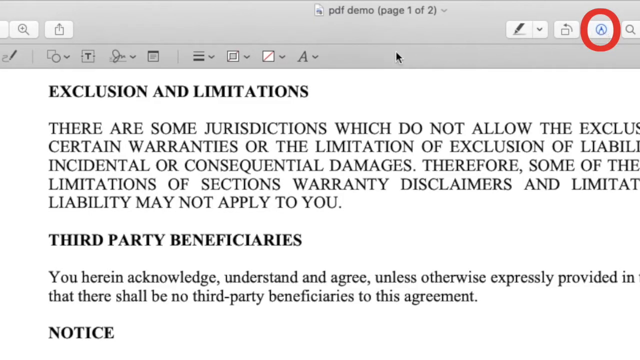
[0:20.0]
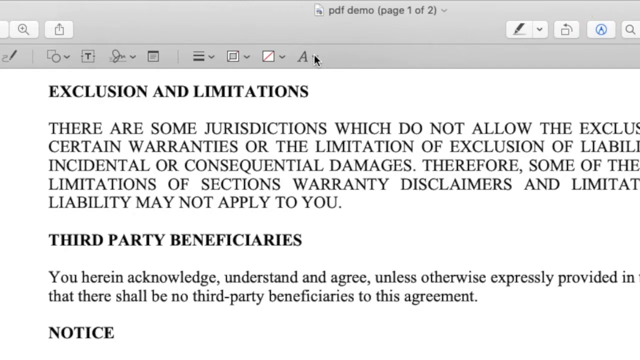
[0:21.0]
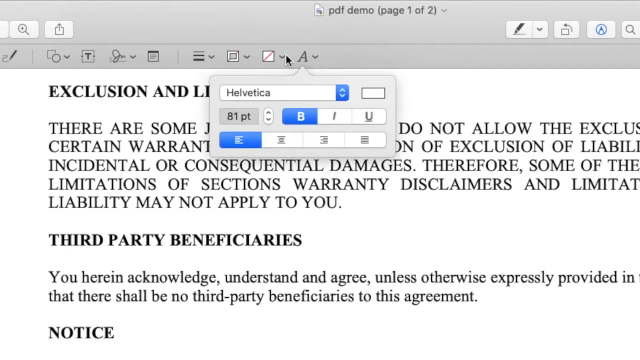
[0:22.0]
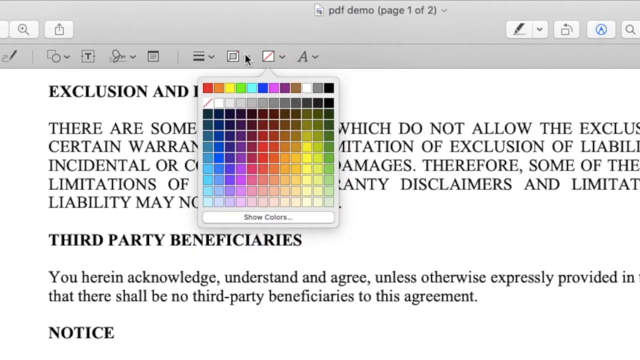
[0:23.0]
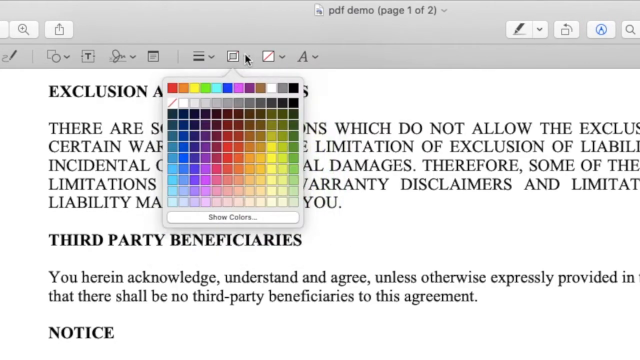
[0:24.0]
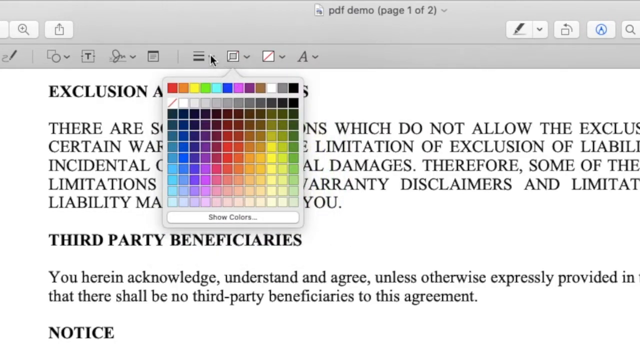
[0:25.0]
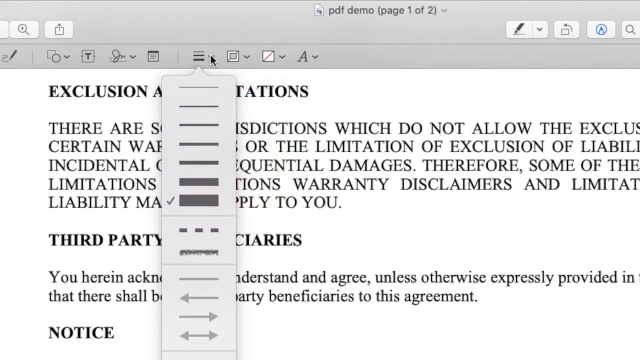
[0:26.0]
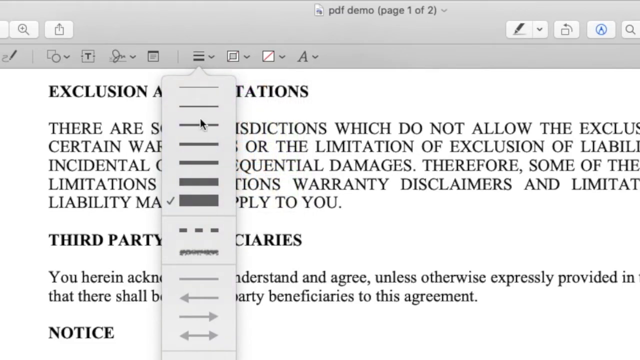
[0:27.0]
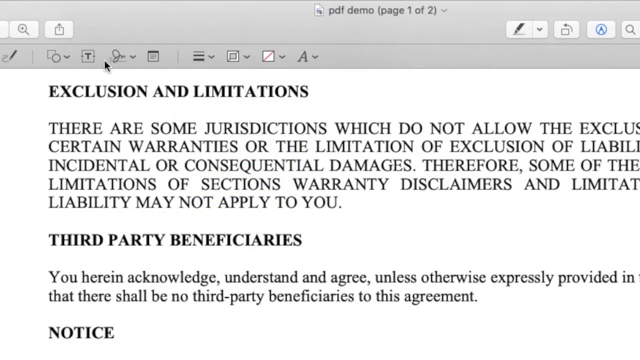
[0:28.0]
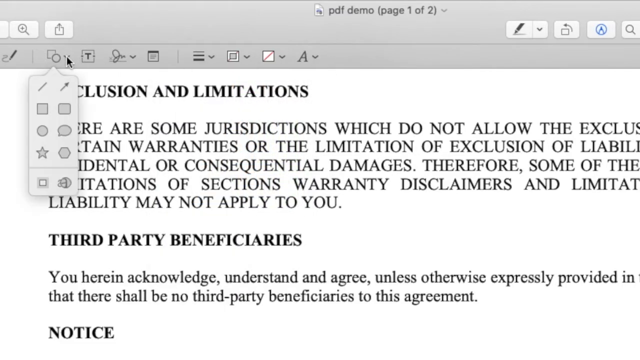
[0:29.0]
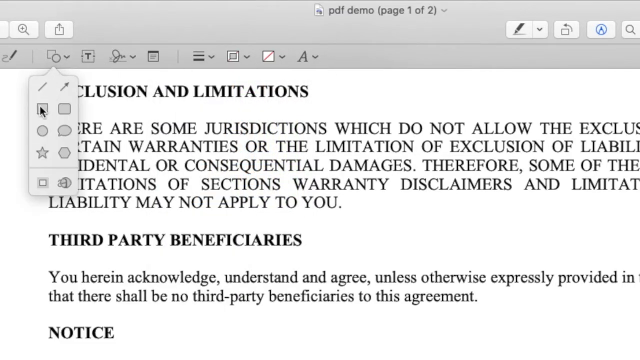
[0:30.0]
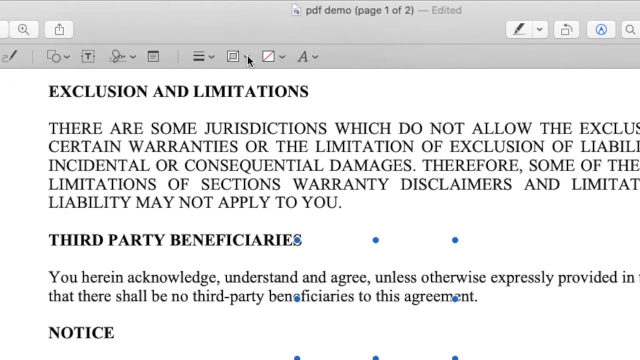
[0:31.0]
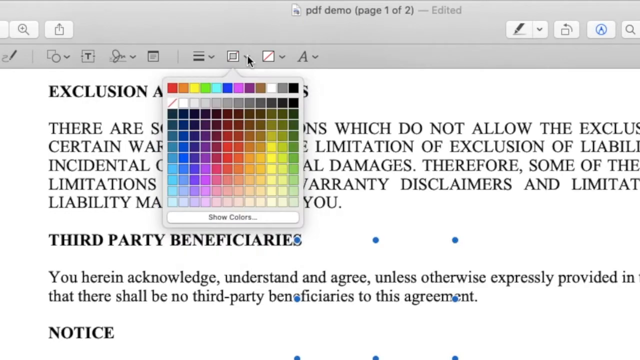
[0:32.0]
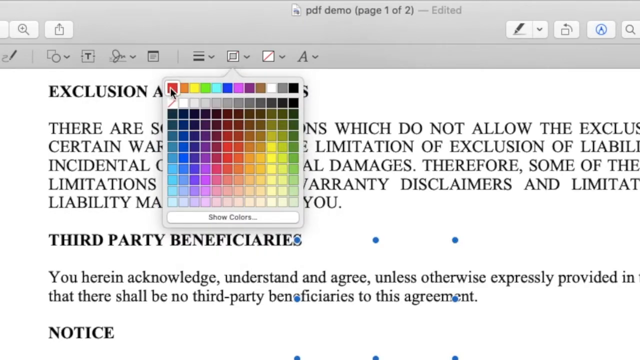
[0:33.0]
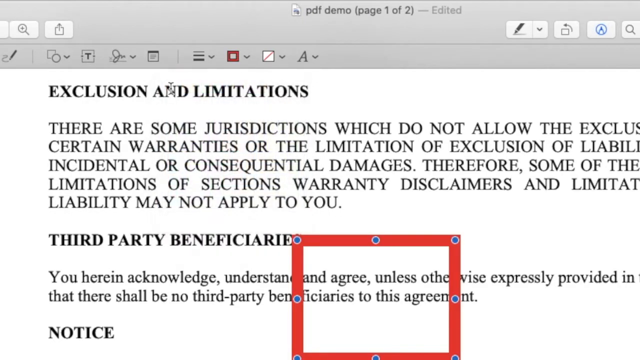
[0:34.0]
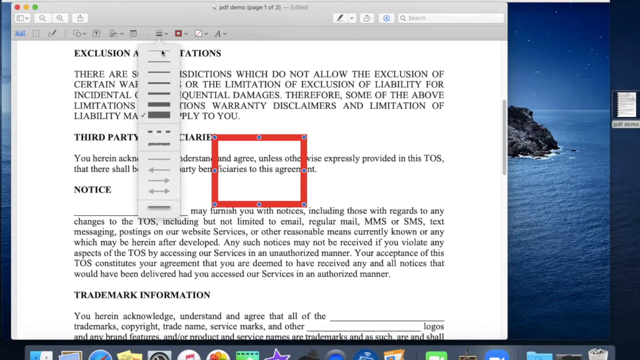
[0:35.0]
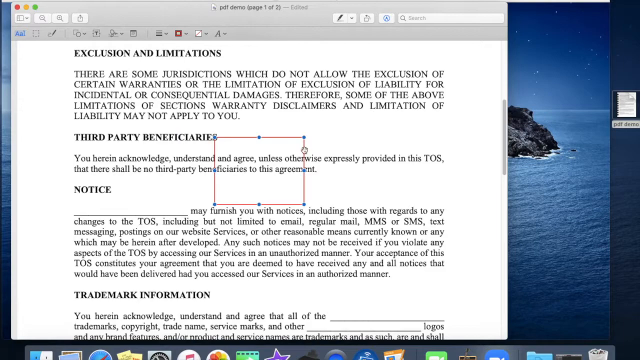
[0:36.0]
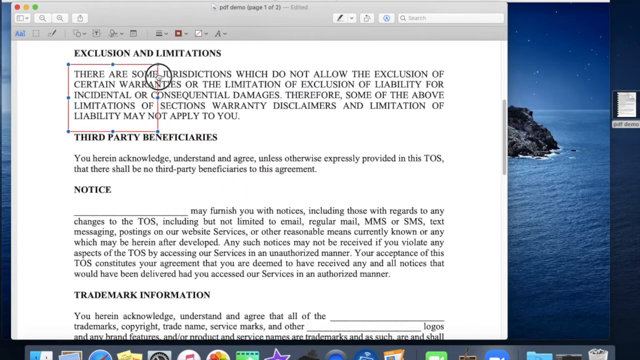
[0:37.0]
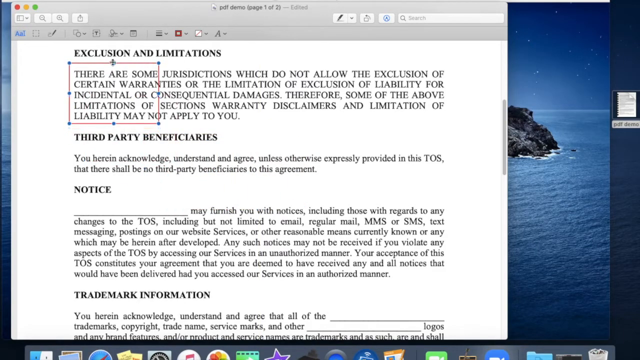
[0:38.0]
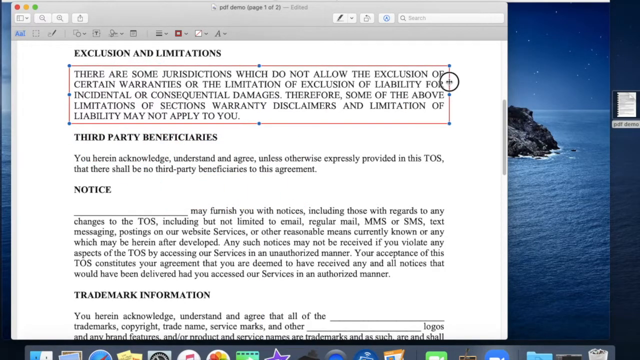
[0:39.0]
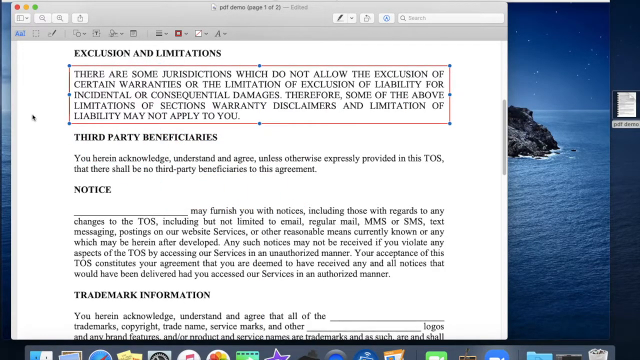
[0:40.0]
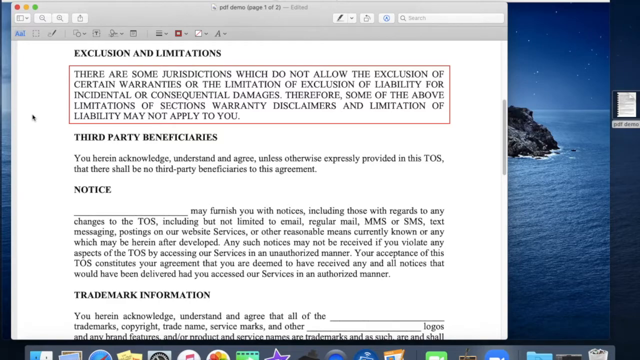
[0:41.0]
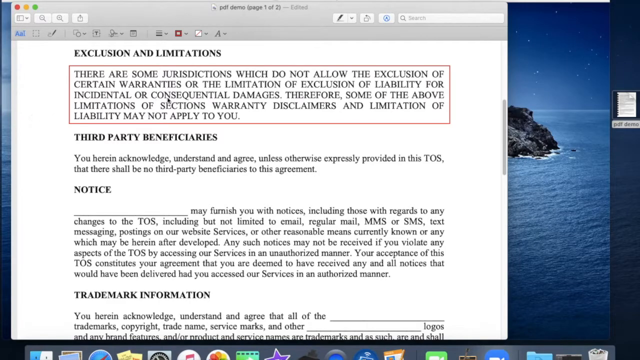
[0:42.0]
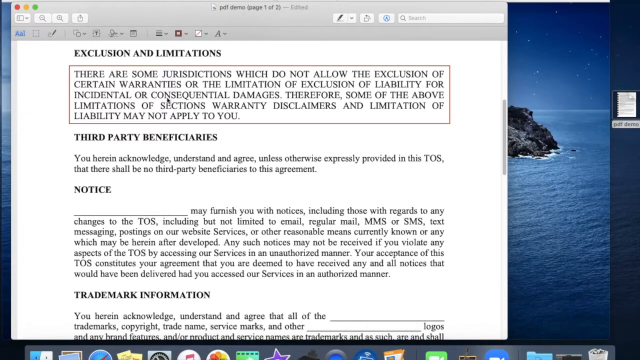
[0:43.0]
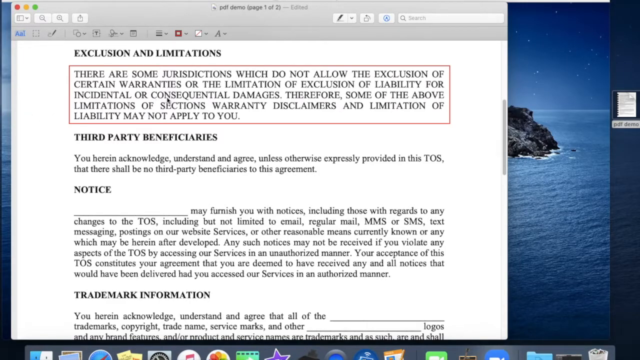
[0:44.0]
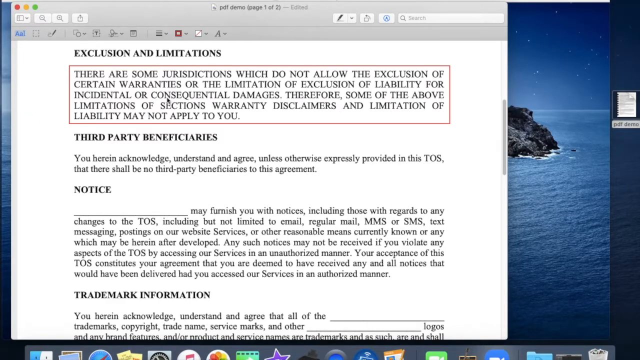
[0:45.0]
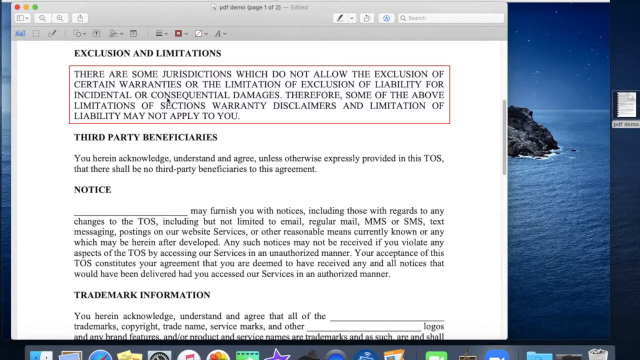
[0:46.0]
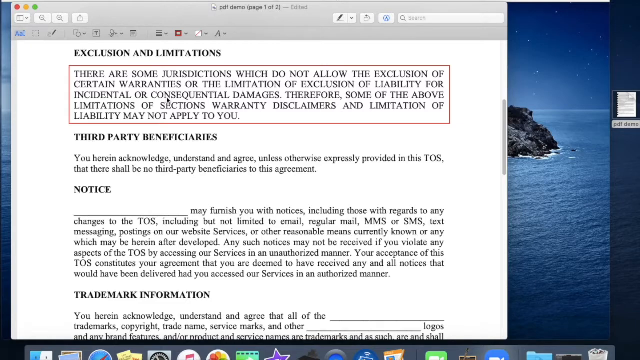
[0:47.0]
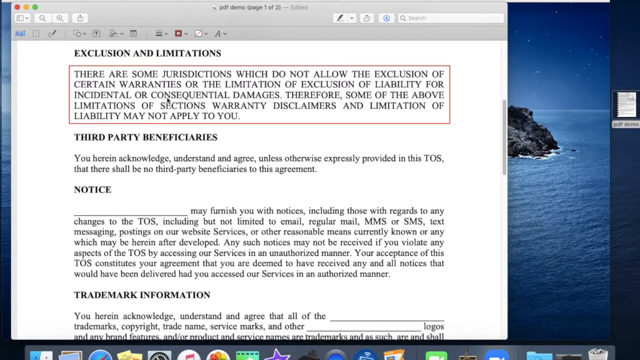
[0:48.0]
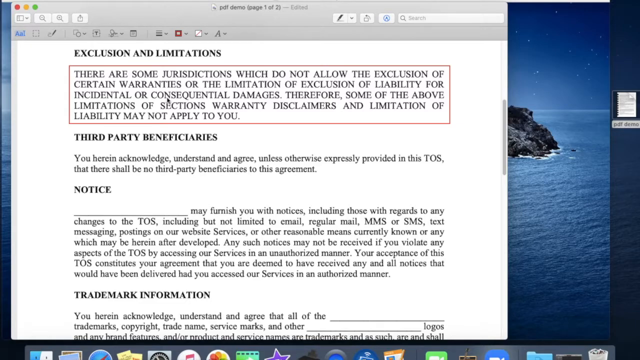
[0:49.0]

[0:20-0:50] A page in a Windows application is shown, with a title at the top reading "PDF demo, page one of two" above a white screen with black writing. The first heading reads "exclusion and limitations", and another reads "third-party beneficiaries". A black cursor is in the top right-hand corner of the screen. It moves to the centre of the screen and clicks an icon of an A, which changes the font. The cursor then goes through each of the icons at the top of the screen in turn, showing a drop-down menu for each: one changes the font colour and another changes the depth and width of the lines on the page. A red text box opens on the screen and is moved around, placed at the beginning of the first paragraph and then extended to cover all of the writing in that paragraph. The text box has red edges, and the cursor highlights this section of the text.